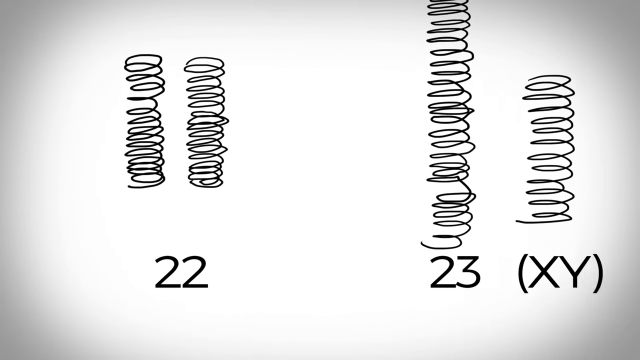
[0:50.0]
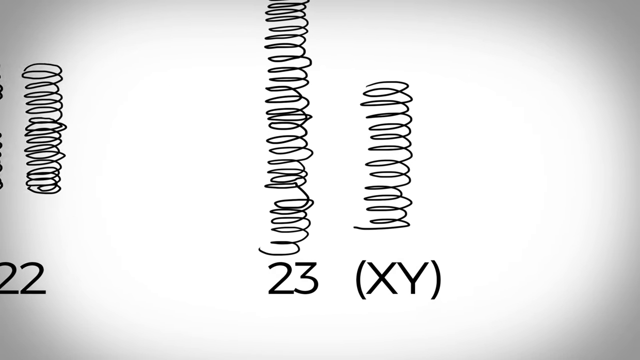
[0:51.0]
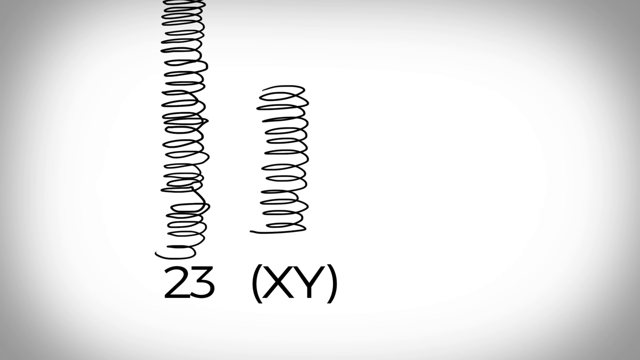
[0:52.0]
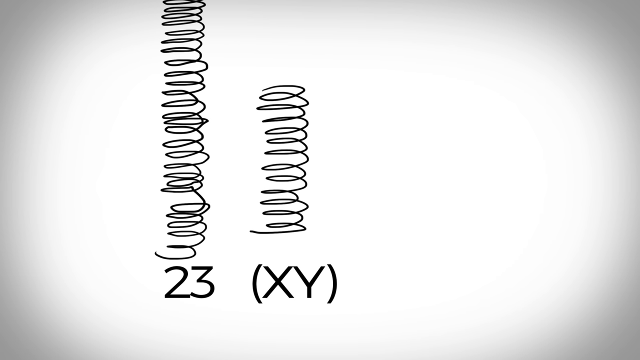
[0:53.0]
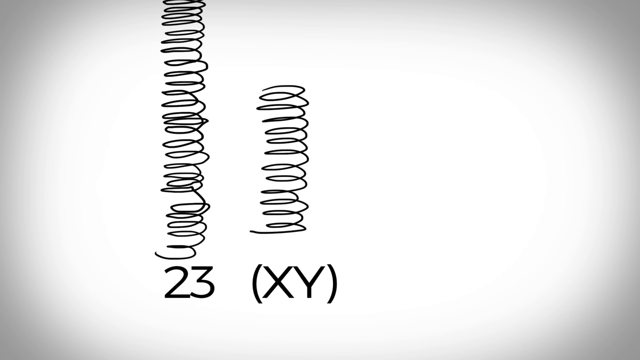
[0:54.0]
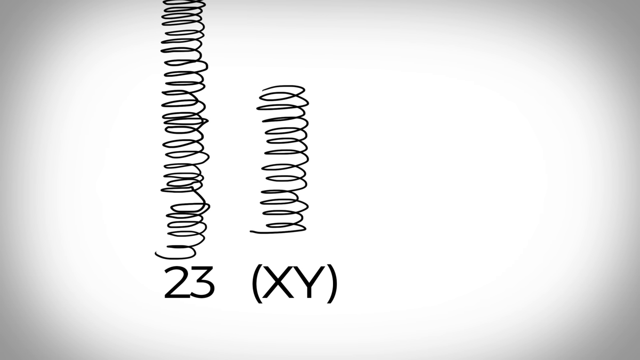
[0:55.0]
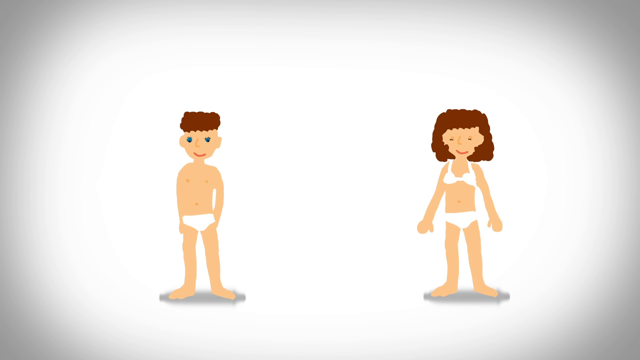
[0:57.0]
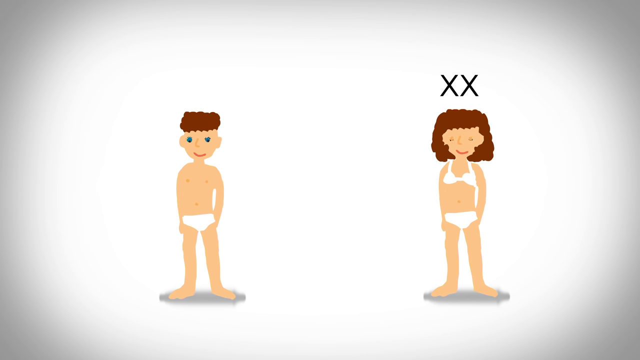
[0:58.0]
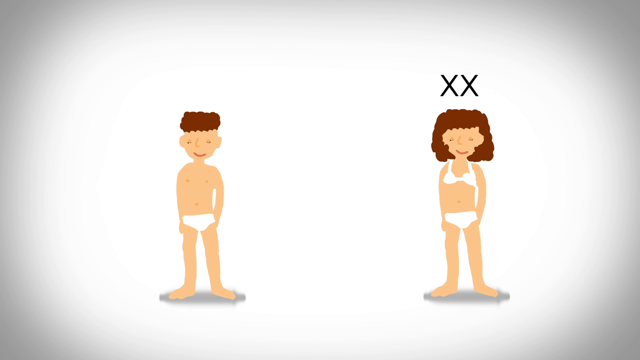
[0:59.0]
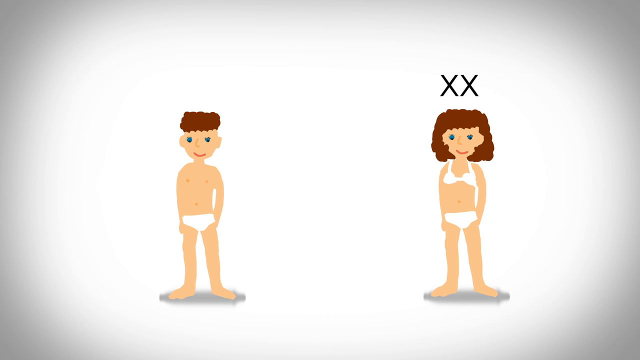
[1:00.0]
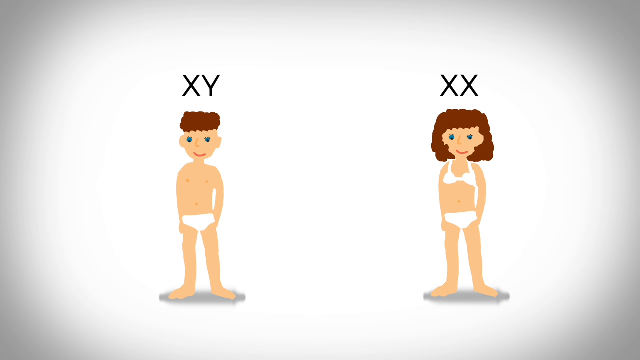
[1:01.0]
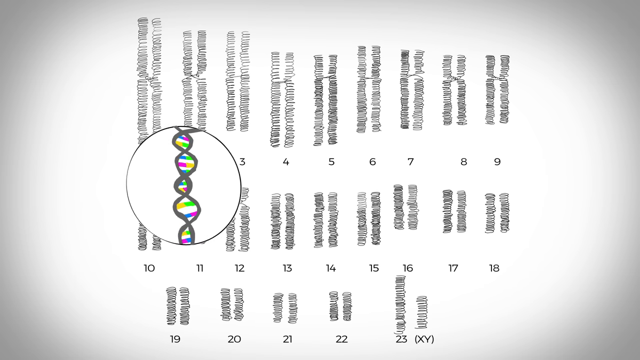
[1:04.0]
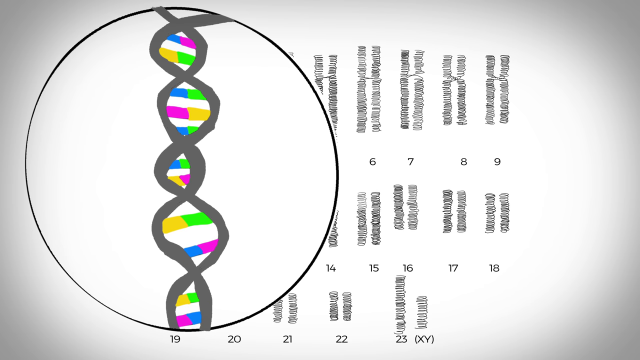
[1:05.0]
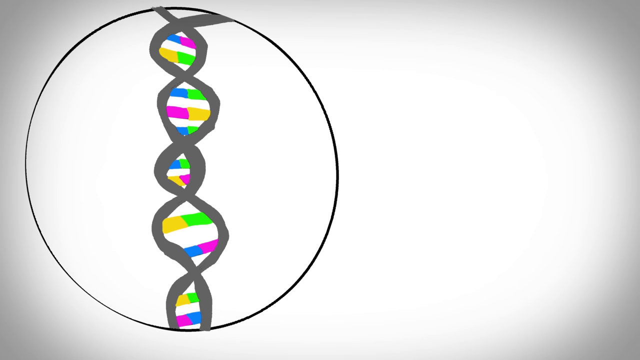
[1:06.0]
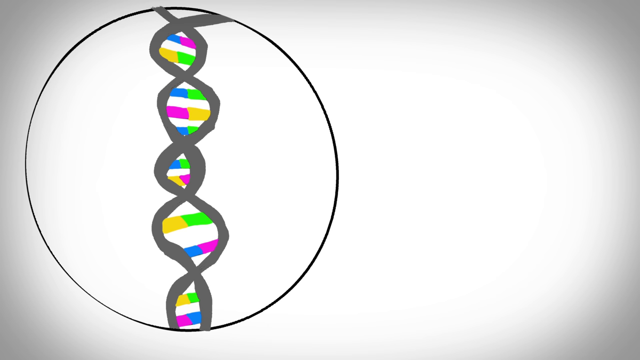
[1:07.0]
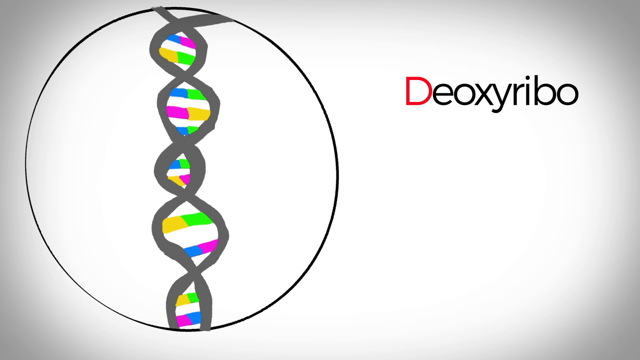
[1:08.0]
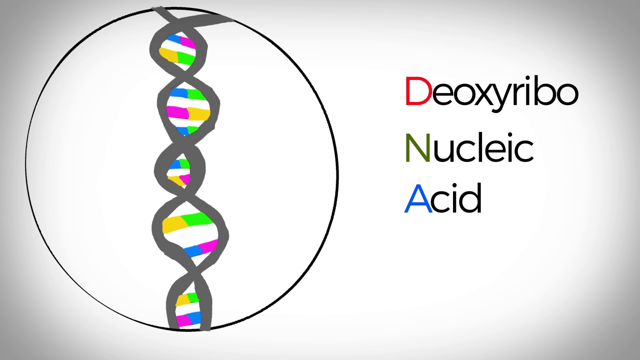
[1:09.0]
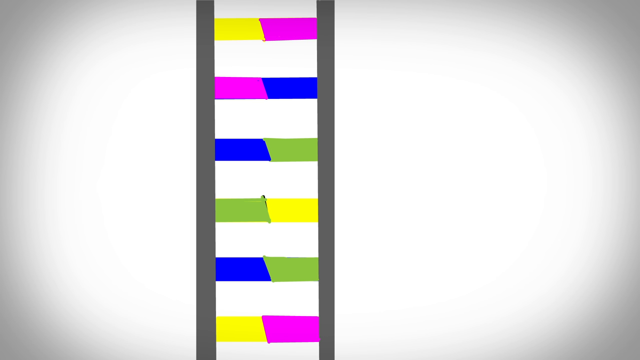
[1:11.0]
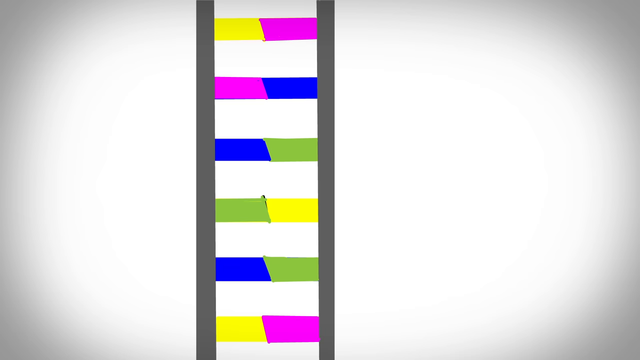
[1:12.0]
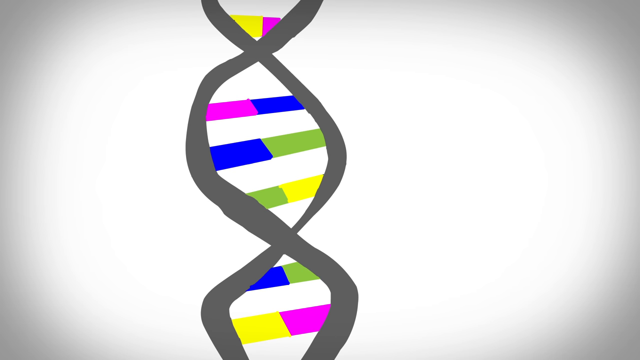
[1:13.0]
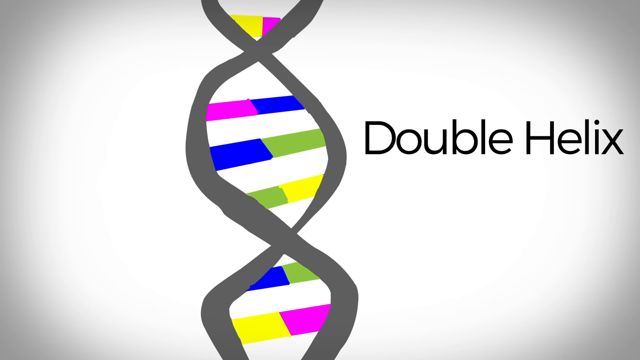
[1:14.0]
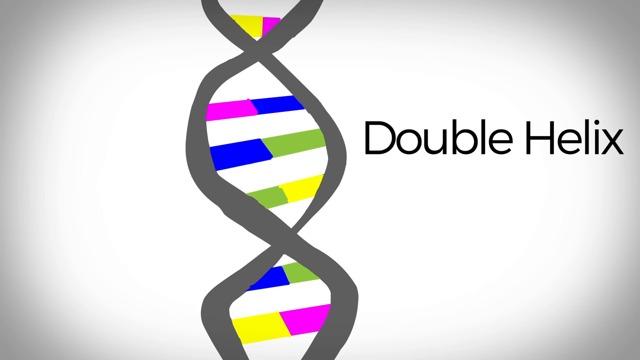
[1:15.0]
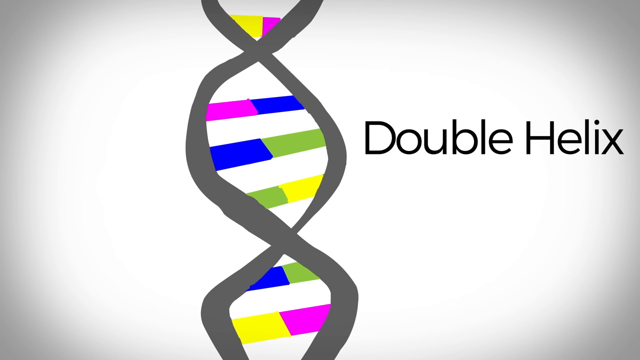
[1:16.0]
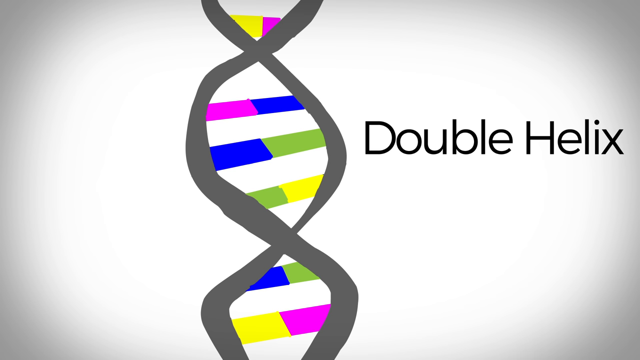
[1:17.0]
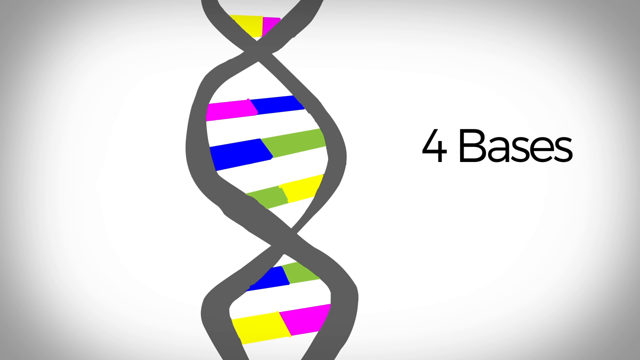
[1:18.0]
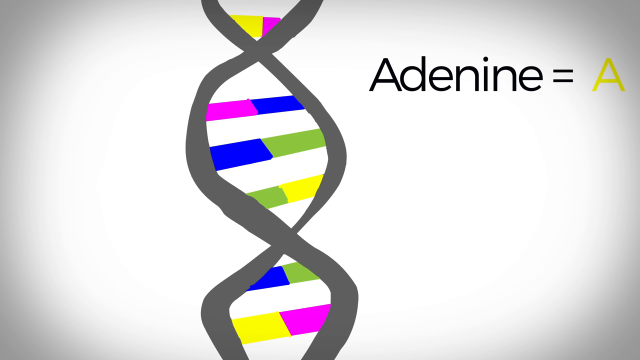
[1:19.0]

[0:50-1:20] Two curly lines that look like springs are shown on a white background, with the number 22 underneath them. To the right is one very long curly line going up, with the number 23 underneath; all the lines go up. To the right of that is a shorter curly line with the letters x and y in parentheses underneath. The camera pans to the right, showing the 23 line and the xy line, and a boy appears on the left side of the screen, standing in his underwear, with blue eyes and brown hair. On the right side of the screen, to his left, a woman with curly, brown, roughly shoulder-length hair stands in a bra and underwear. They hold their hands out to their sides. The woman puts her hands down by her sides and "xx" appears above her head; she moves her arms out, then back out again, and "xy" appears above the boy's head. They blink the whole time. The screen with the double lines then appears, along with a circle containing a DNA strand in a double helix, with colored lines running through the helix in pairs such as blue and pink, yellow and green, blue and green, and pink and yellow. It gets big, the other elements disappear, and the DNA stays on the screen. To its right the word "deoxyribo" appears, with "nucleic" below it and "acid" below that. Next, two gray lines appear with connected colored lines between them, representing DNA, and they twist together to show the DNA, with "double helix" written to the right. That disappears and "four bases" appears; that disappears in turn and "adenine" equals "A" appears.